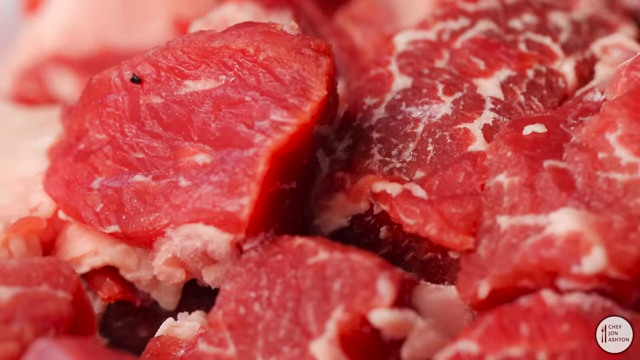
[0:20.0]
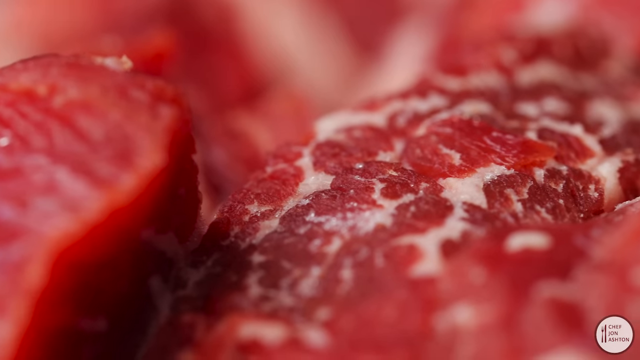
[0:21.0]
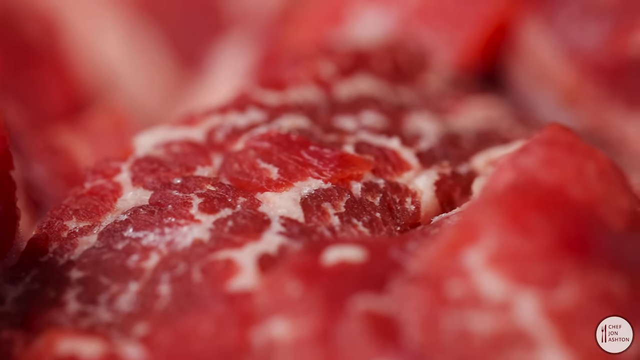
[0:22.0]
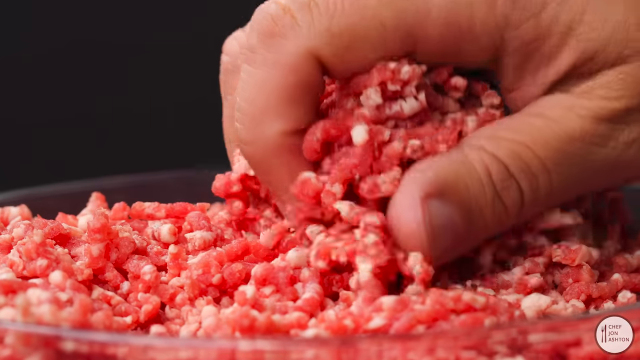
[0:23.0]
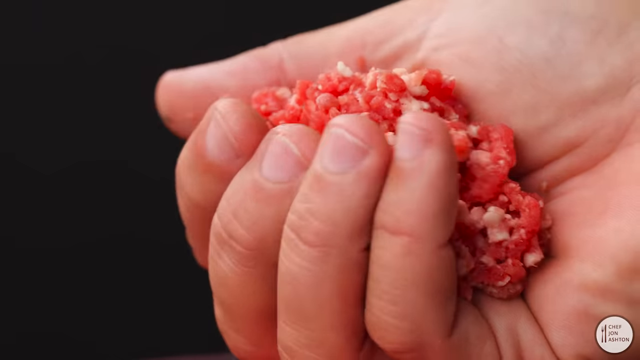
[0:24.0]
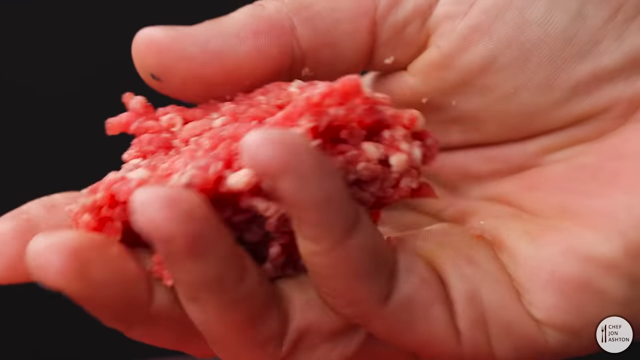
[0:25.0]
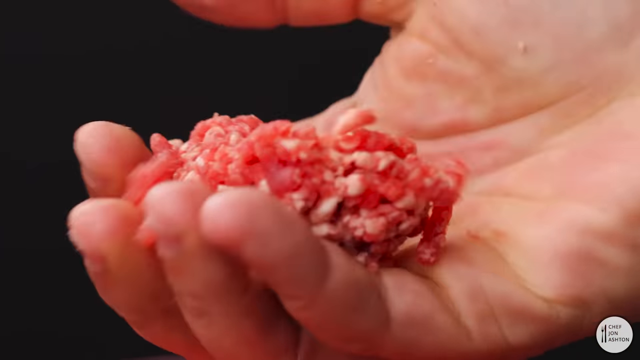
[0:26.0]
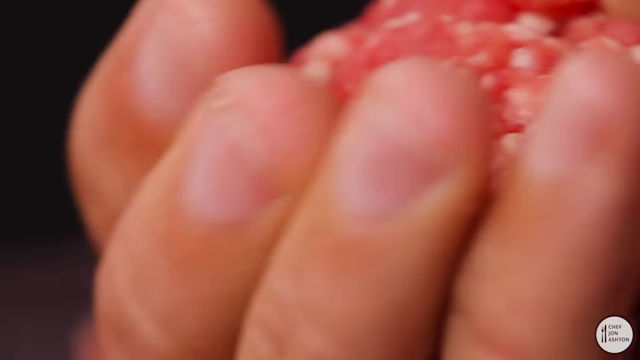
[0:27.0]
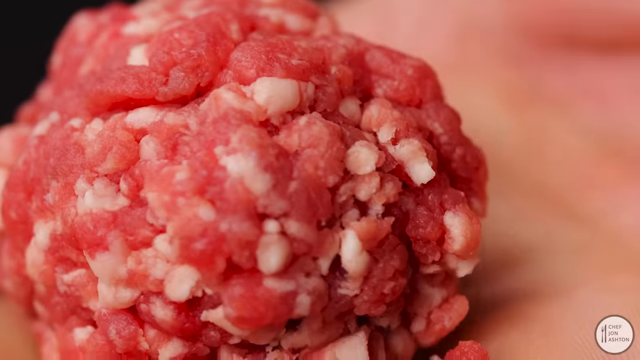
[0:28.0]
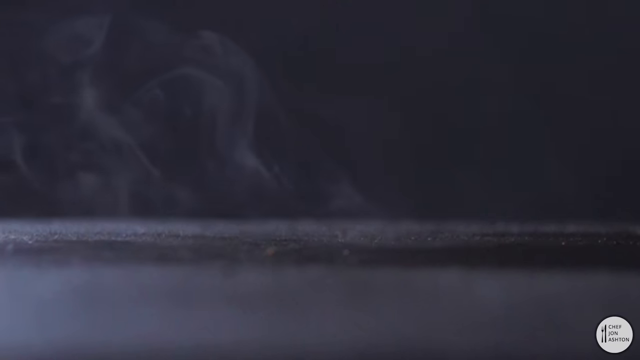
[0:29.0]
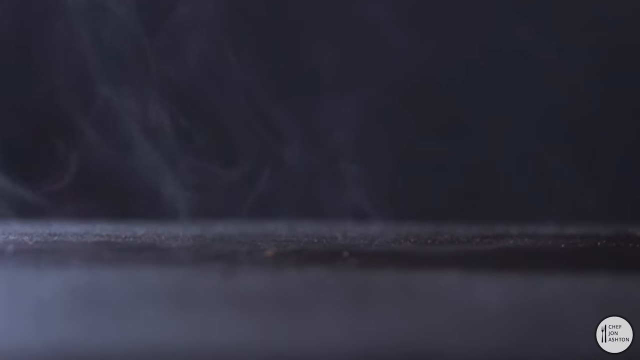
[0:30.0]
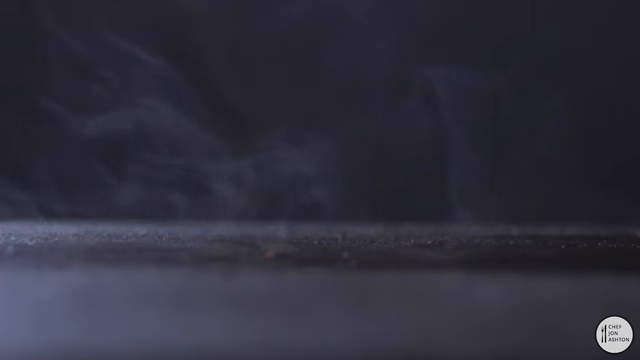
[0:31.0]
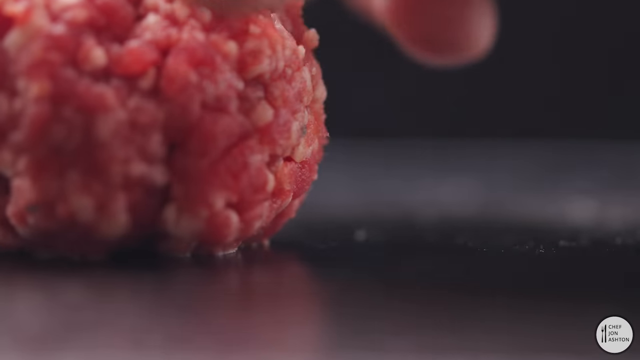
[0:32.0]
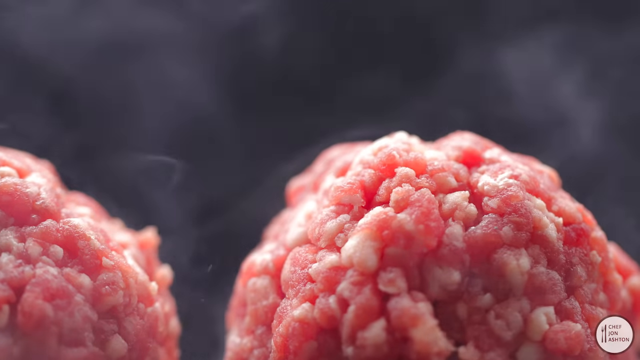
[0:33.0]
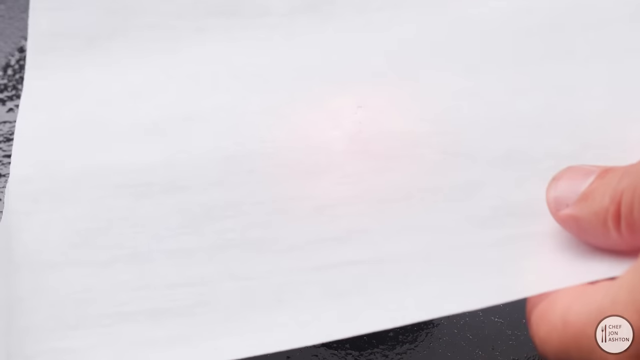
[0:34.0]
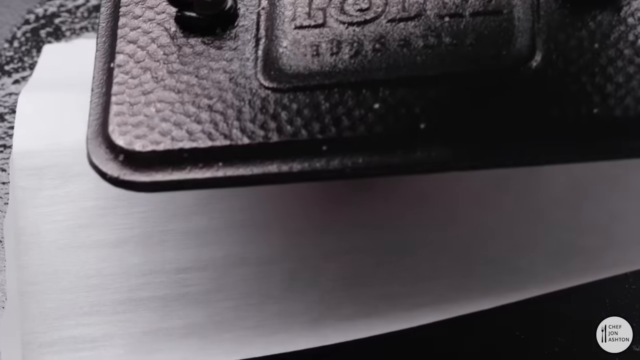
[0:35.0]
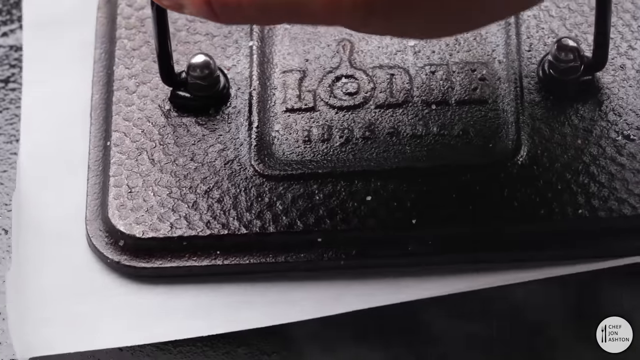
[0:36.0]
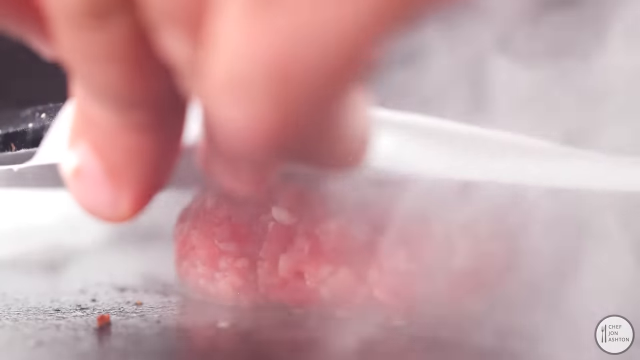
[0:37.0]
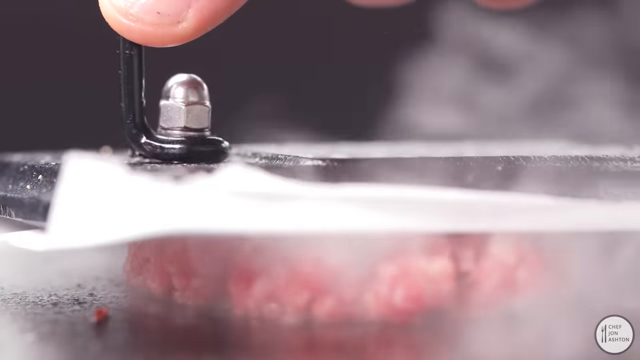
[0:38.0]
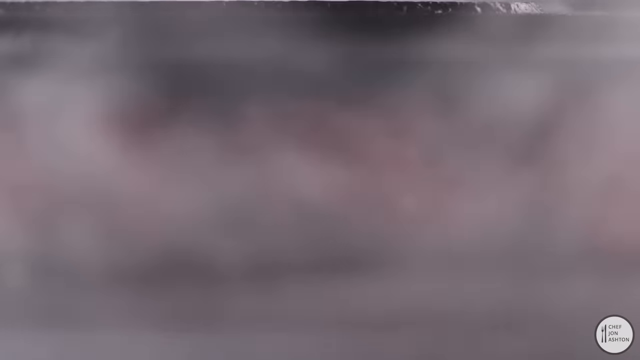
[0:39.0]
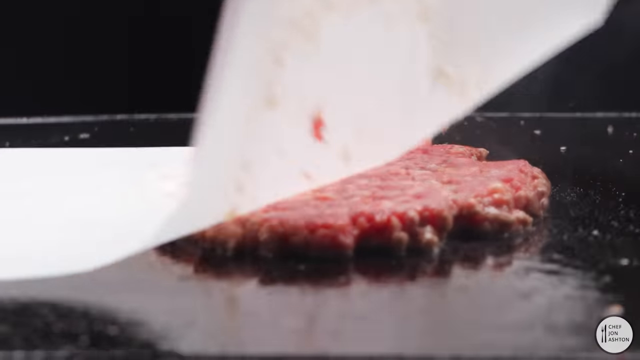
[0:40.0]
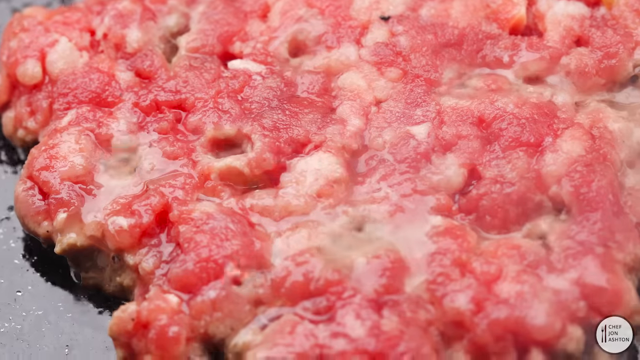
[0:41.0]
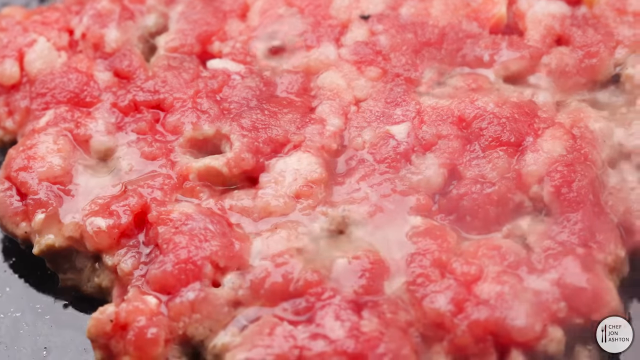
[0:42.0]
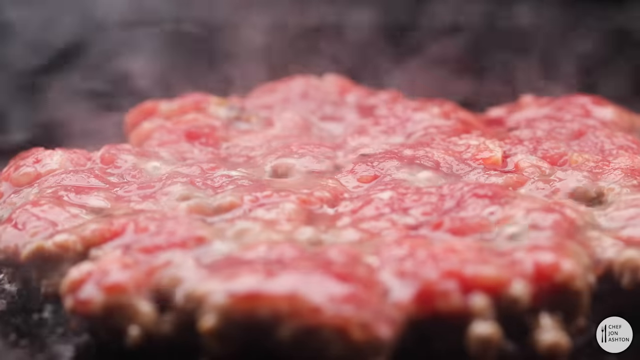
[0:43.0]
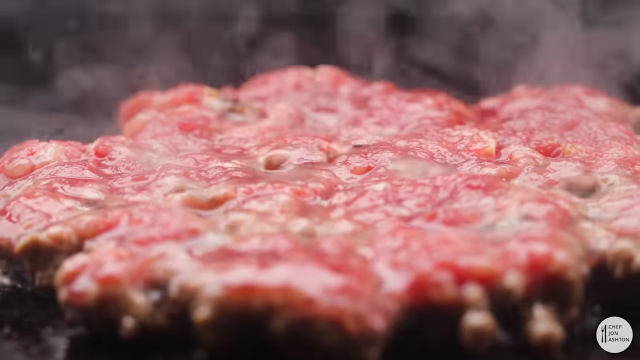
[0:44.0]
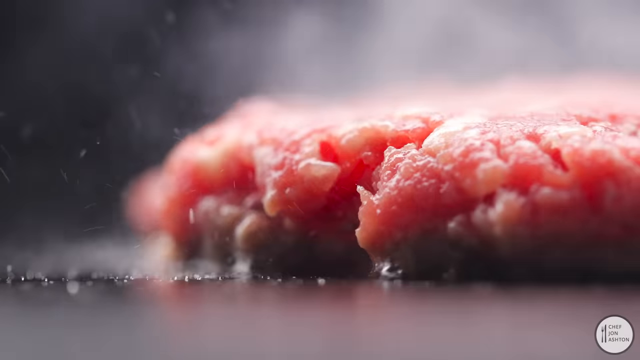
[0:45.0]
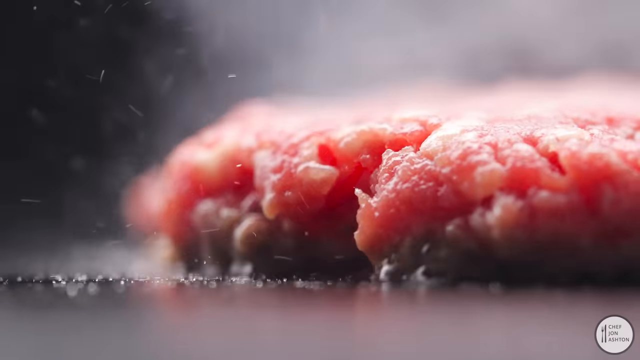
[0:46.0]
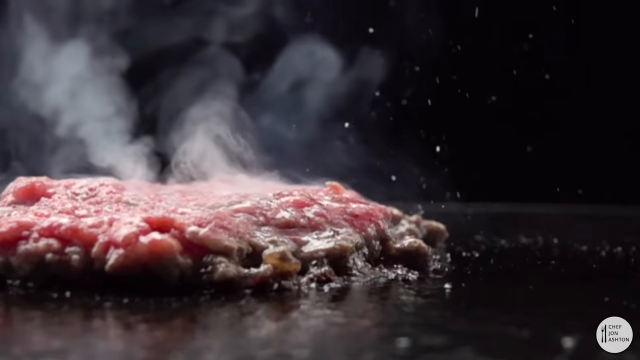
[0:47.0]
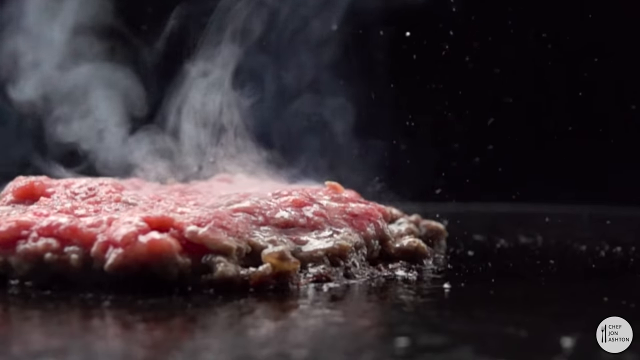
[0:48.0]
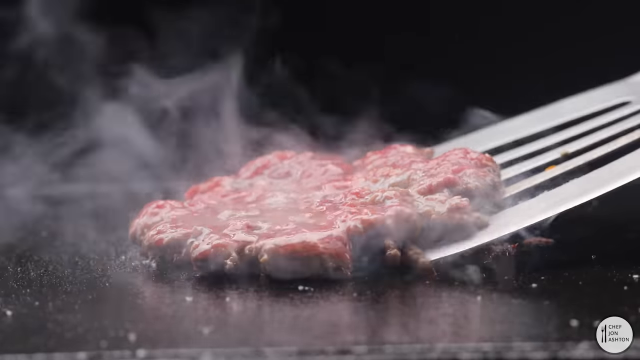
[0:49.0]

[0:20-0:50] Some kind of sliced meat appears, looking like a type of steak; it is red with marbleized fat visible within it. Next, some diced-looking meat is in a skillet. Someone picks up a handful of the meat from the skillet, holds it in their hand, and smashes it with their fingers against their palm. A surface that looks black is then shown with either steam or smoke rising from it. Someone places a hamburger patty onto a grill or skillet, and then two patties are on the skillet or grill. Someone places a piece of wax paper on top of a patty, sets a cooking weight on top of it, and smashes the patty under the weight.